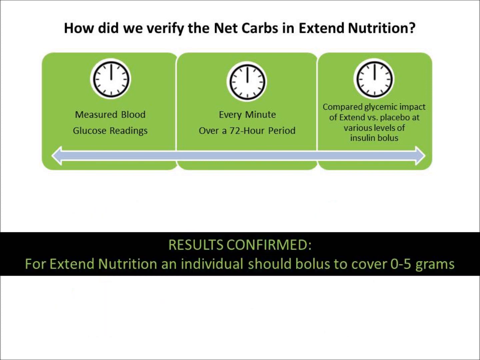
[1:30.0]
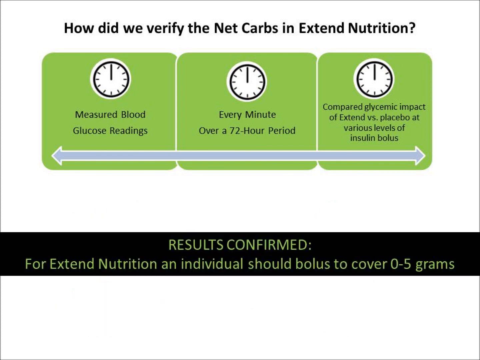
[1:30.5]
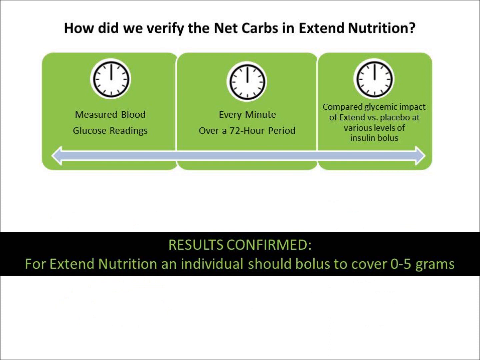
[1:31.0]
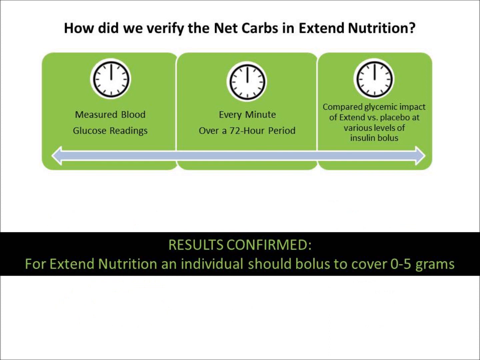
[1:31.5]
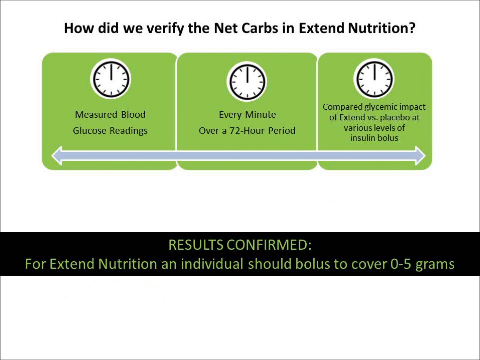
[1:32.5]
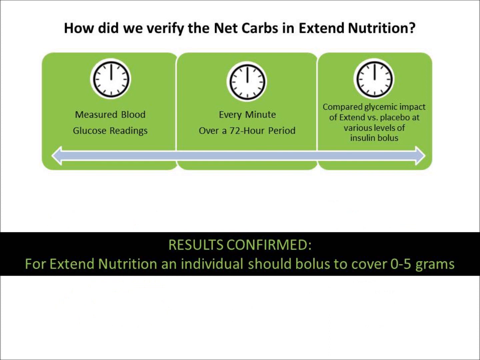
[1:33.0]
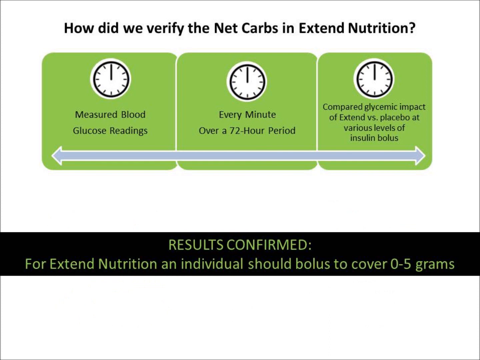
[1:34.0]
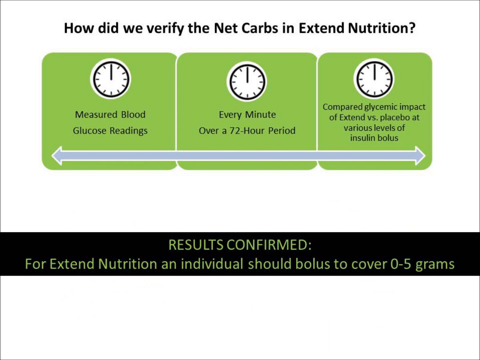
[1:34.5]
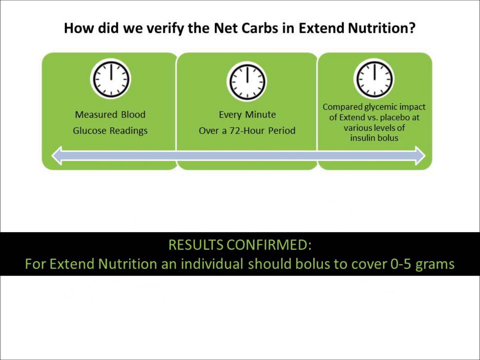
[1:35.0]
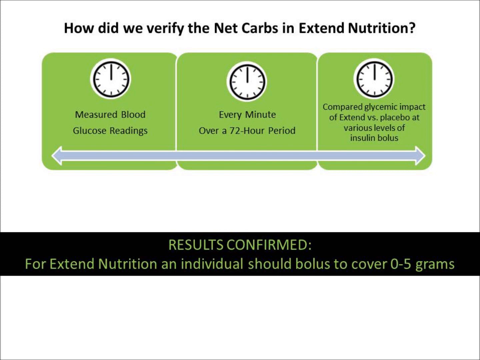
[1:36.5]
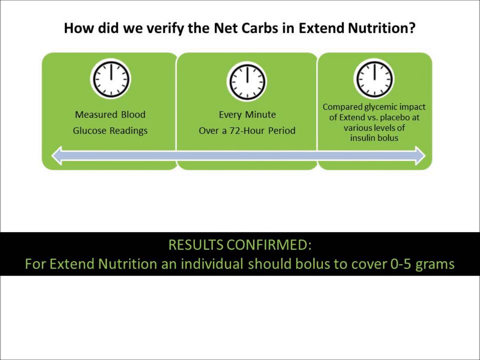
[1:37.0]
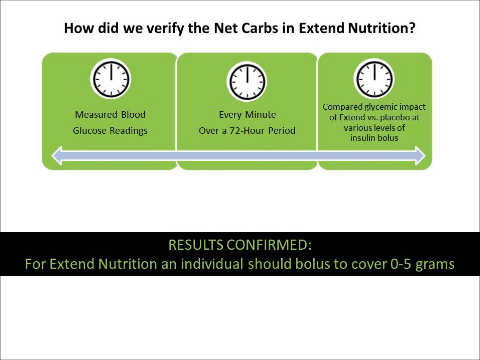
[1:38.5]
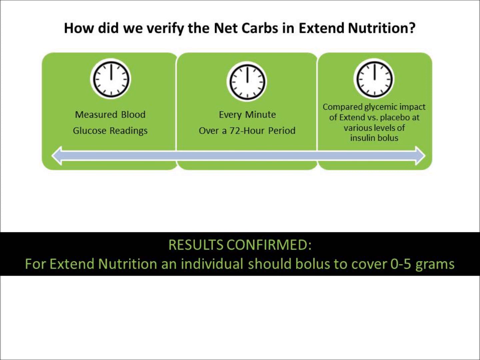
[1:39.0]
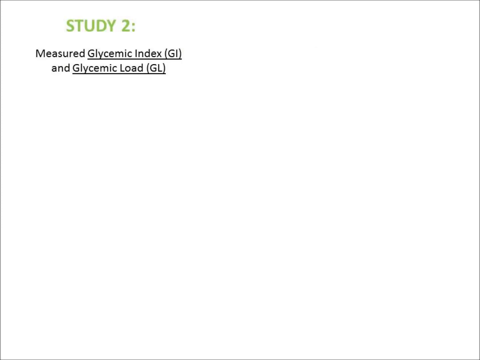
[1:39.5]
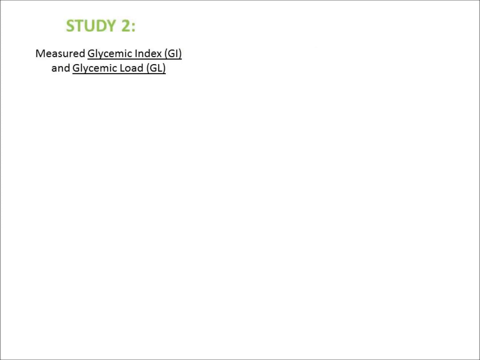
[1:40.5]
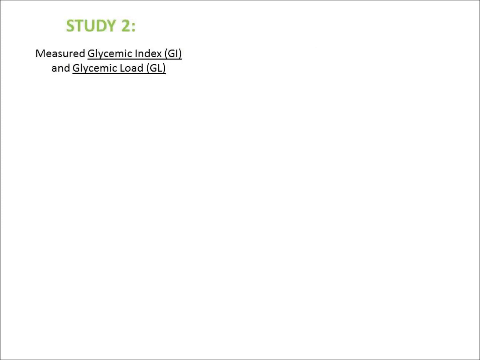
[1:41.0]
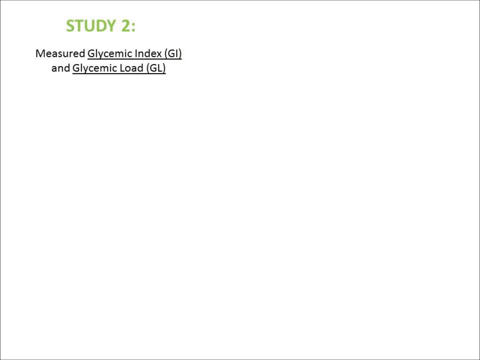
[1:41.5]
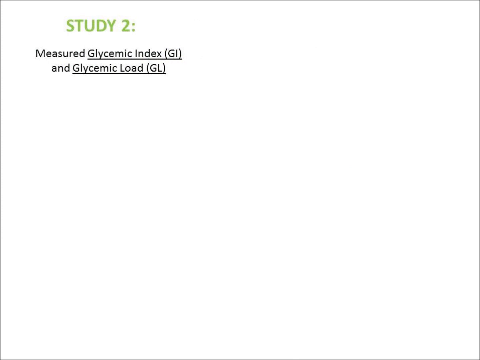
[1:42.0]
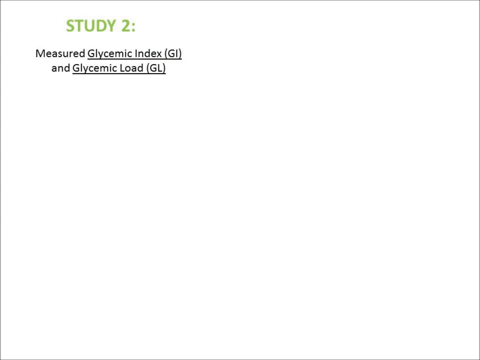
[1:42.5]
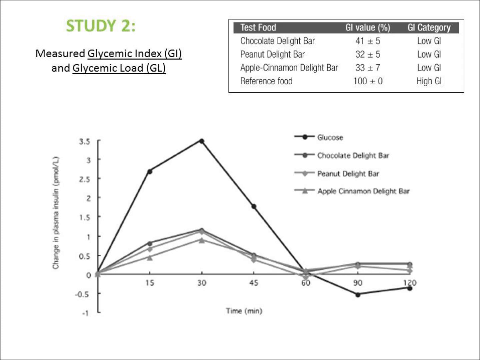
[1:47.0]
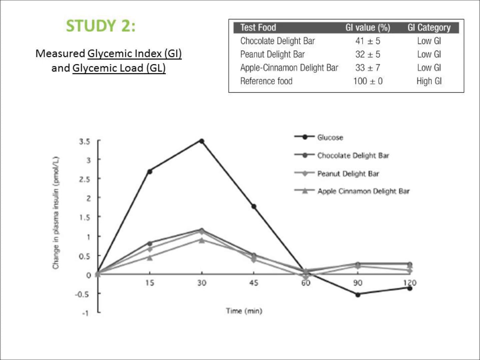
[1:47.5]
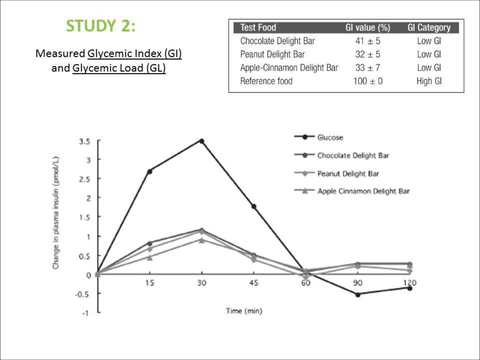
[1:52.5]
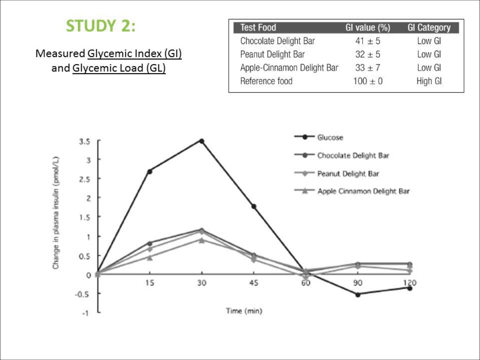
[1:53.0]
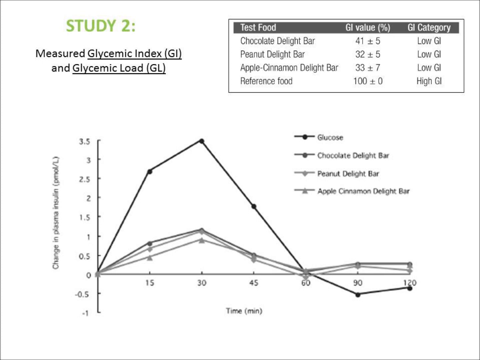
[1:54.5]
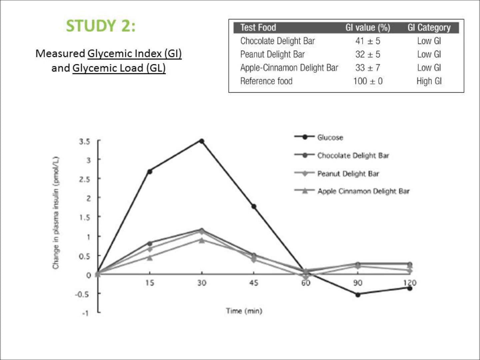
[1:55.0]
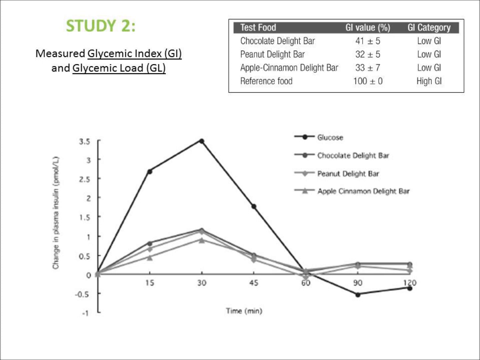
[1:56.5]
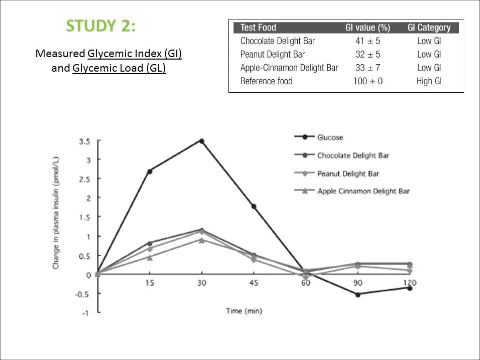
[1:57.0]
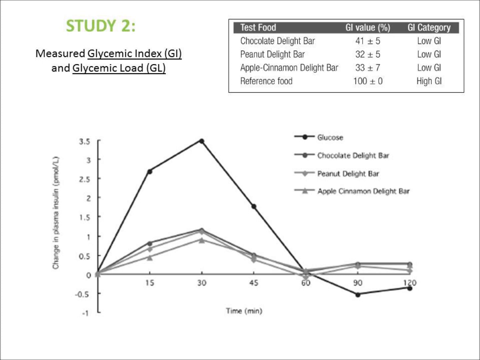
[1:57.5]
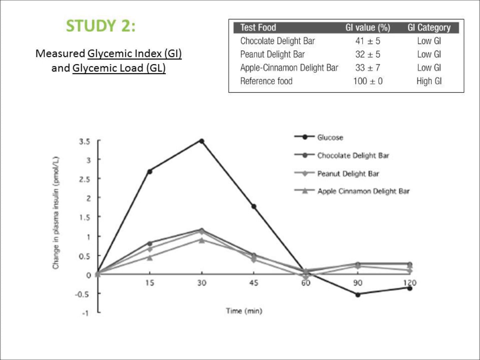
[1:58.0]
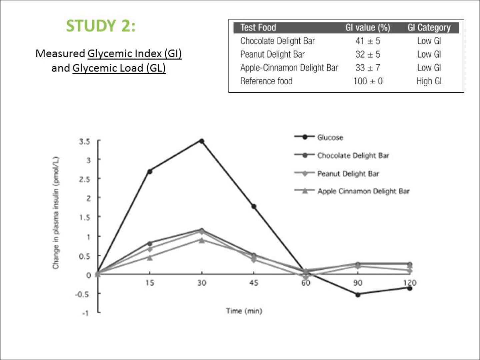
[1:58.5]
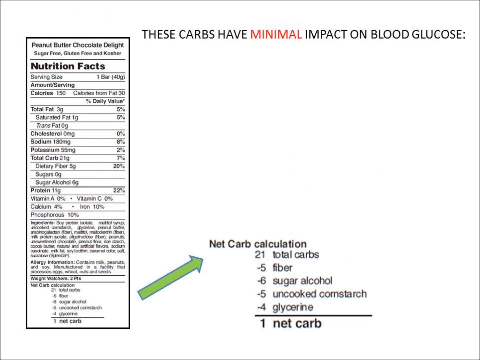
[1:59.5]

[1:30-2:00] The same screen remains, now with text at the bottom beginning "results confirm for extend nutrition," stating how many grams individuals should bolus to cover. A second screen follows with "study to measured glycemic index and glycemic load," and more text and graphics appear. A line graph at the bottom has much of its detail blurred and hard to read, such as the time along the bottom, with "change in plasma insulin" on the left axis. The lines compare the chocolate delight bar, peanut delight bar, apple cinnamon delight bar and reference food, with GI value and GI category listed. Another screen pops up for a split second at the end.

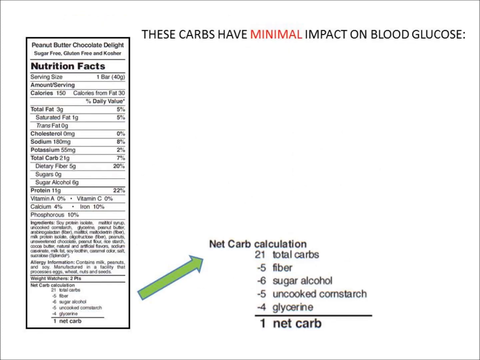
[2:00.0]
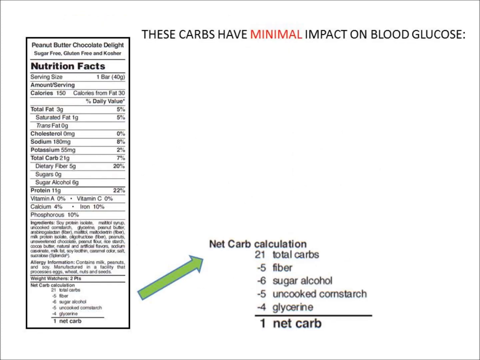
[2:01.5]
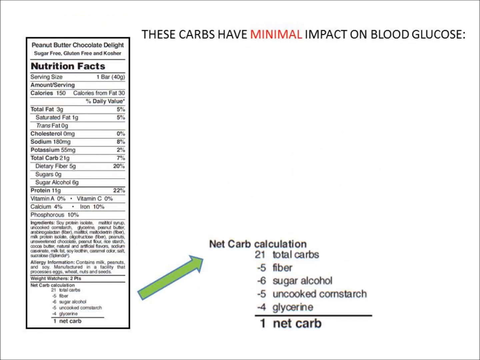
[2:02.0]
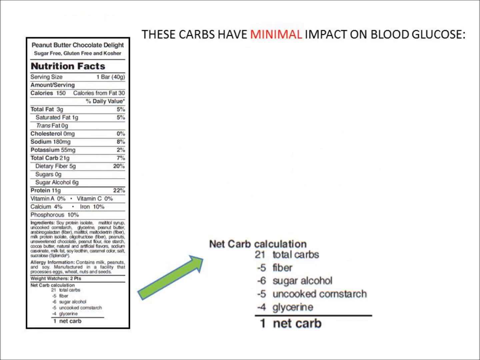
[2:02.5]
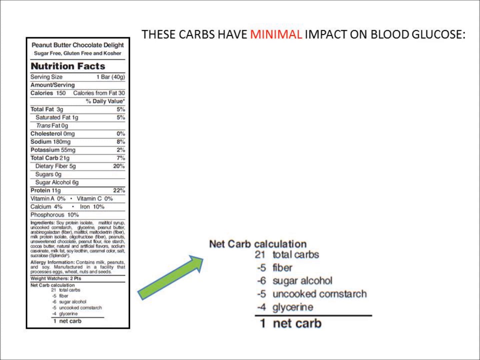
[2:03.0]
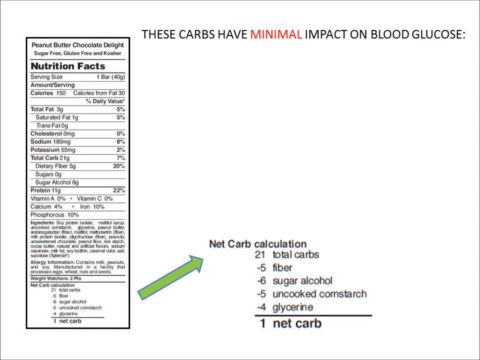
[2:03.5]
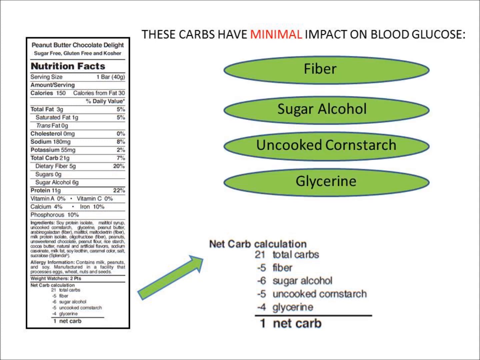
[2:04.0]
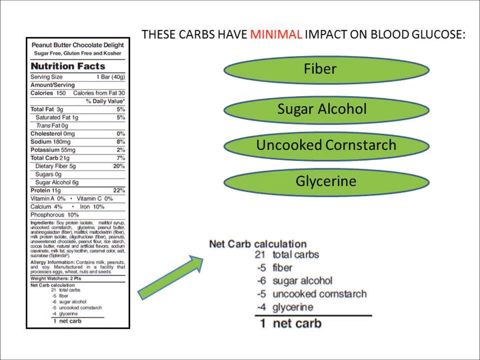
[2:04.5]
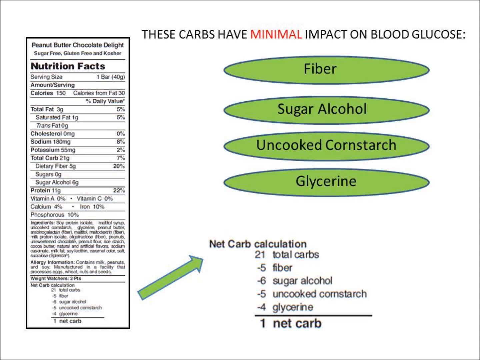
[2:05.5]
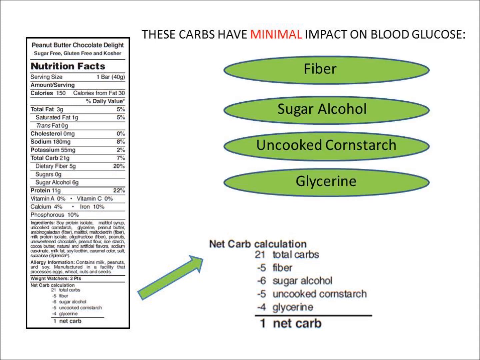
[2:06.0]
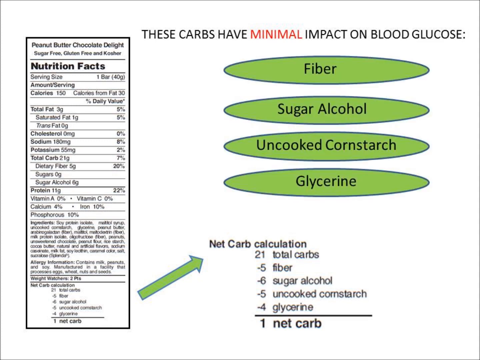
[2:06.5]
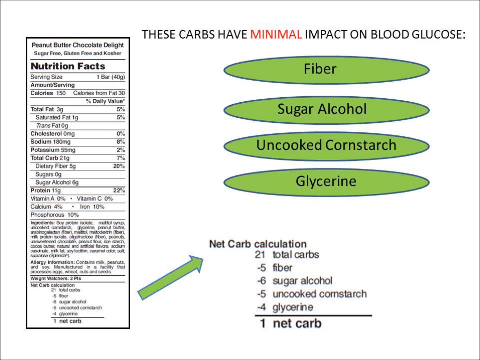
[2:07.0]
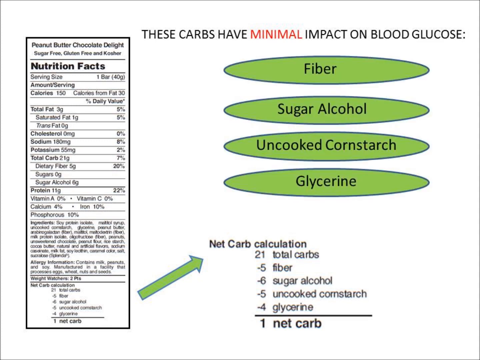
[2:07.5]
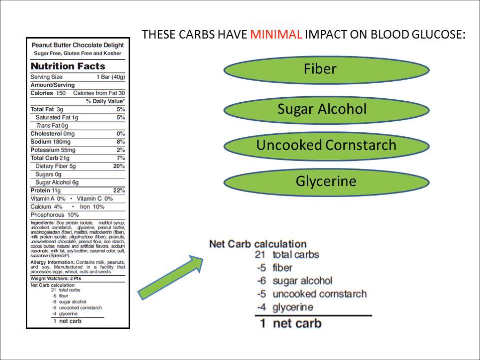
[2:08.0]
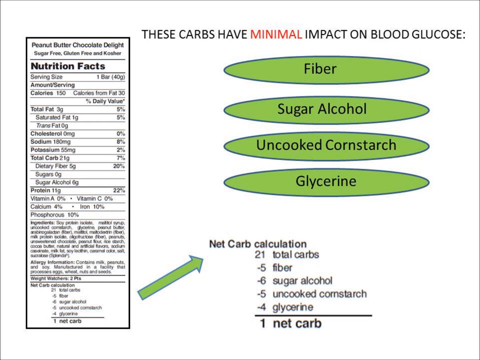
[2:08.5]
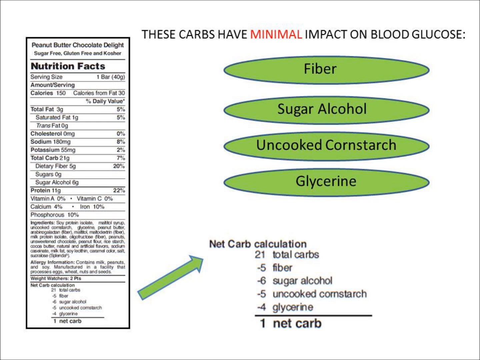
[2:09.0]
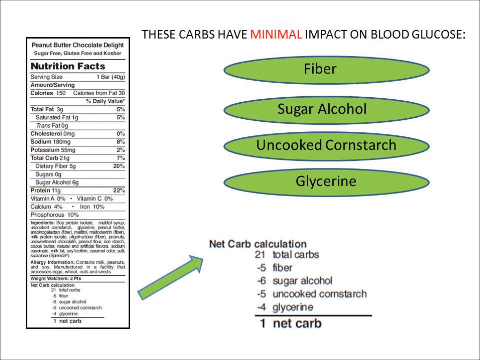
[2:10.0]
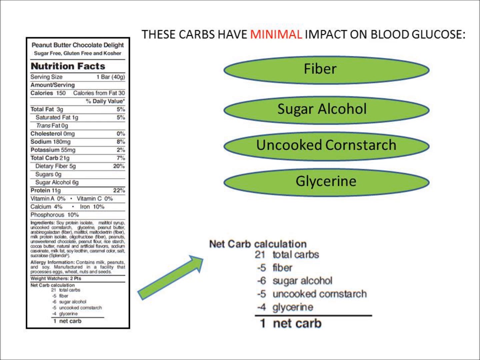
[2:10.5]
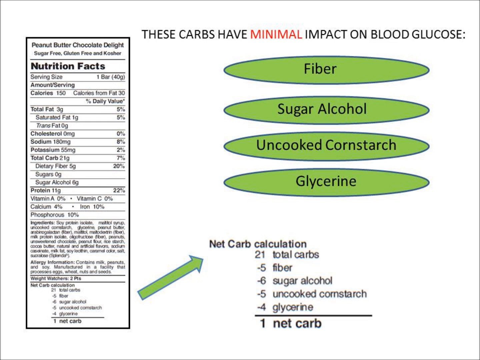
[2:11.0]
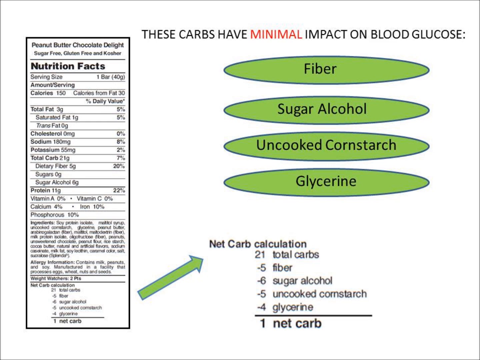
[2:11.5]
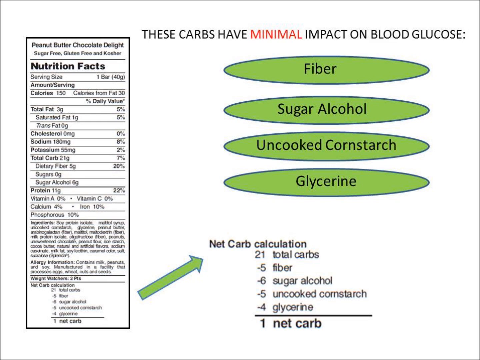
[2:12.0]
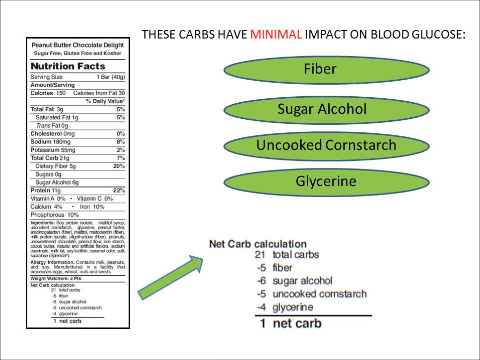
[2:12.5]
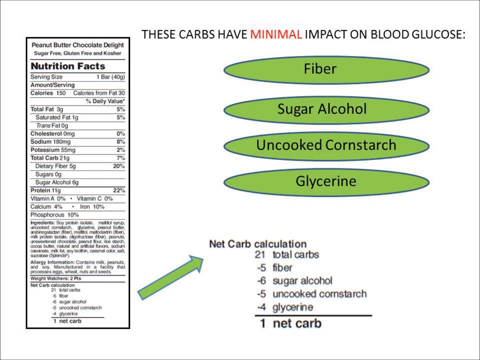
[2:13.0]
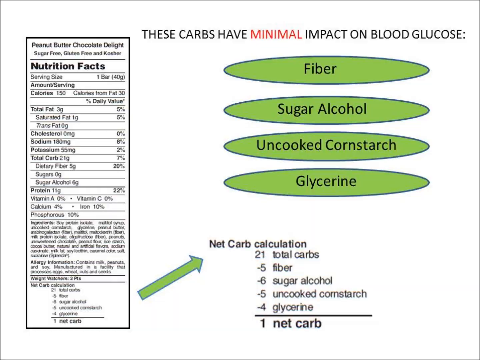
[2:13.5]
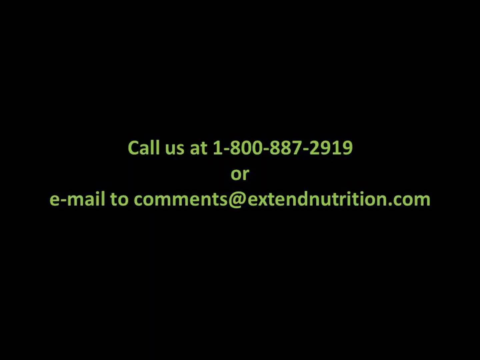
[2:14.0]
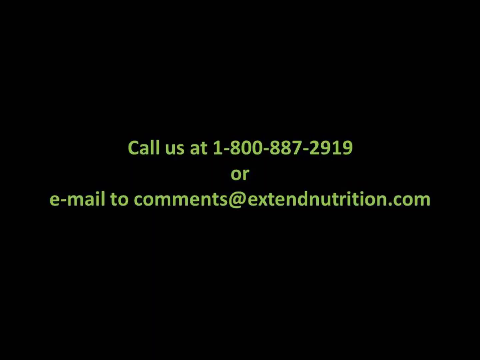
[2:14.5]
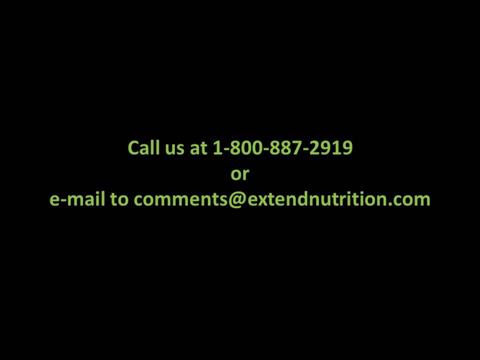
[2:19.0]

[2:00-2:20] A screen reads "these carbs have minimal impact on blood glucose," with what looks like a peanut butter chocolate delight nutrition label at the top. More items pop up: fiber, sugar alcohol, uncooked cornstarch and glycerin. At the bottom is a net carb calculation: 21 total carbs, negative 5 fiber, negative 6 sugar alcohol, negative 5 uncooked cornstarch, negative 4 glycerin, 1 net carb. The next screen says "call us at 1-800-877-2919" or email comments to comments at extendednutrition.com.